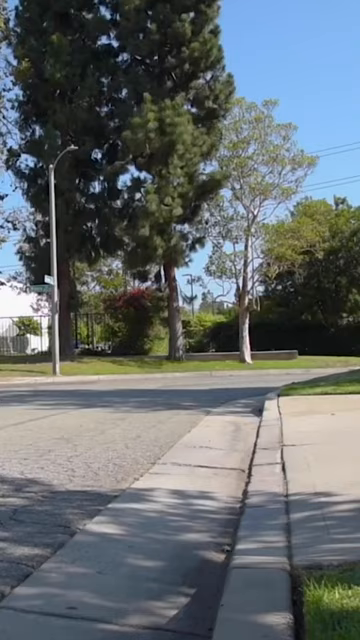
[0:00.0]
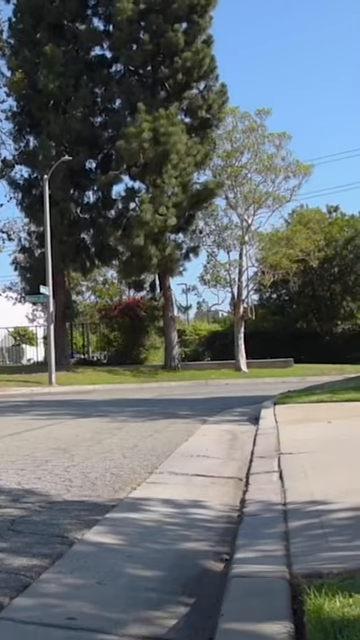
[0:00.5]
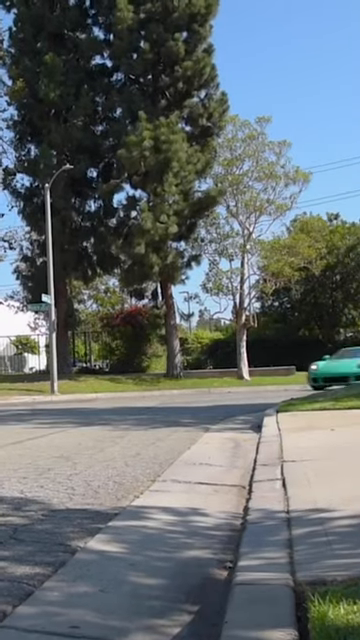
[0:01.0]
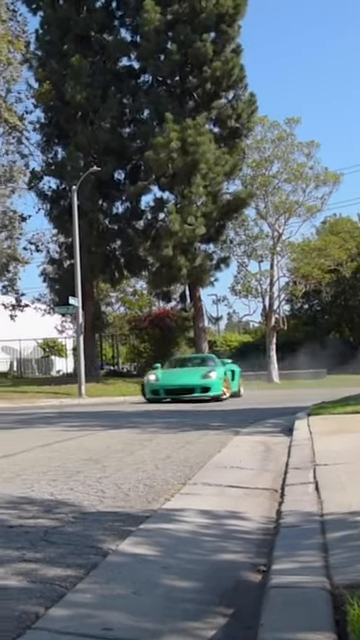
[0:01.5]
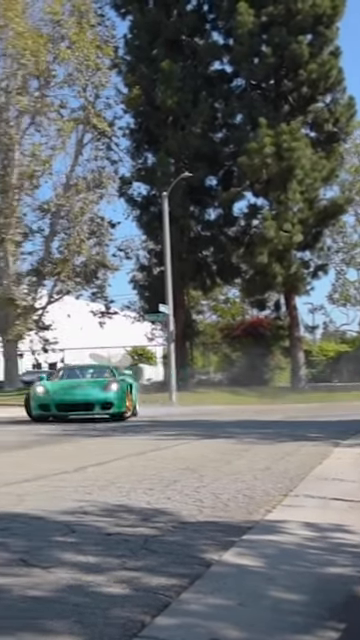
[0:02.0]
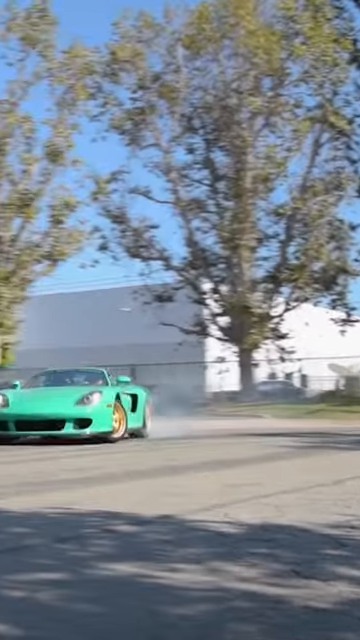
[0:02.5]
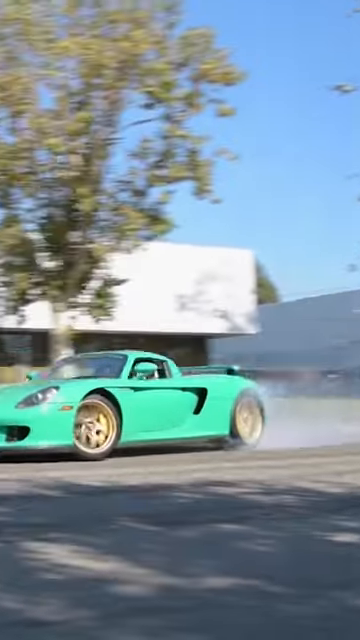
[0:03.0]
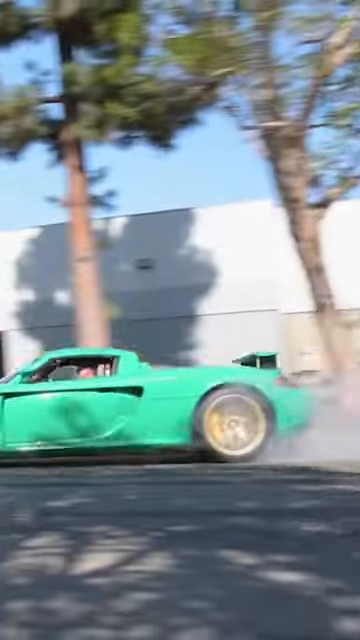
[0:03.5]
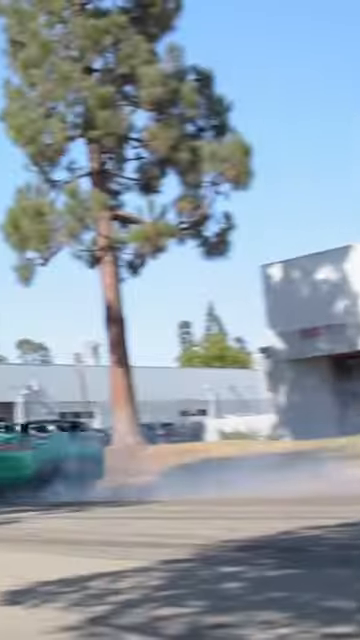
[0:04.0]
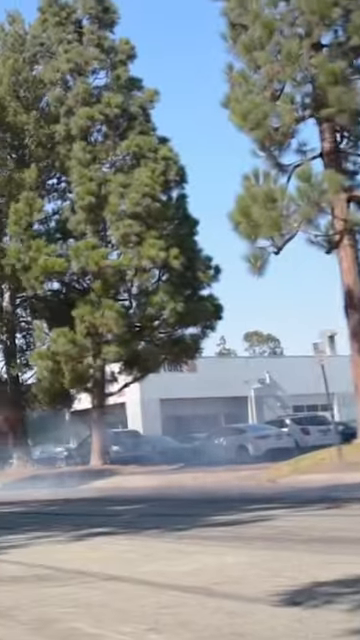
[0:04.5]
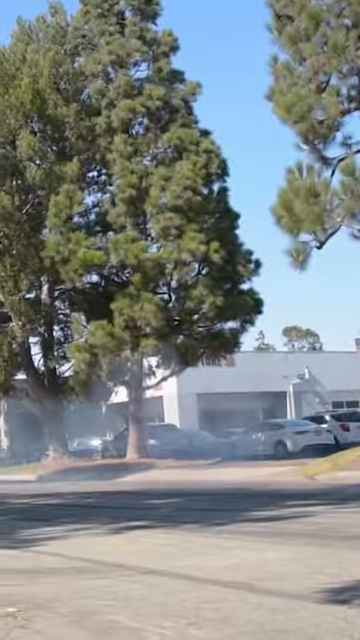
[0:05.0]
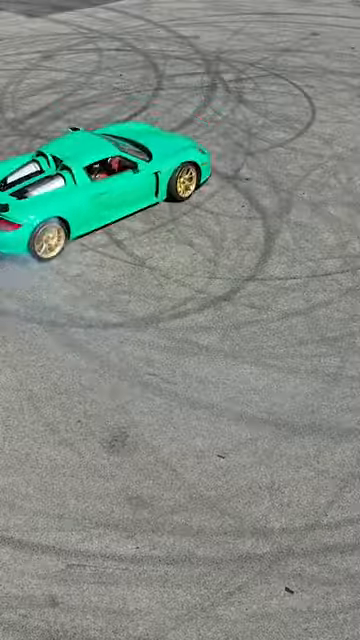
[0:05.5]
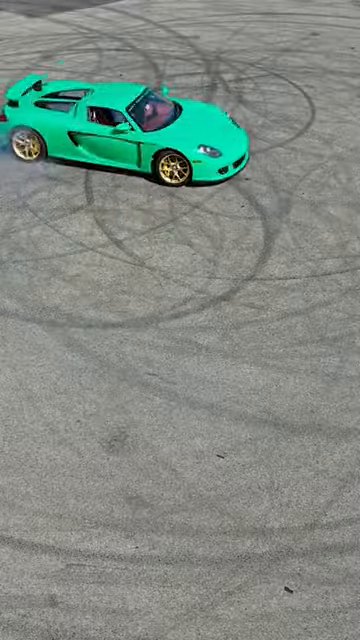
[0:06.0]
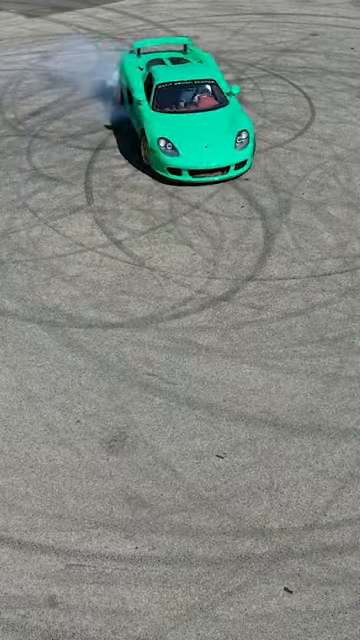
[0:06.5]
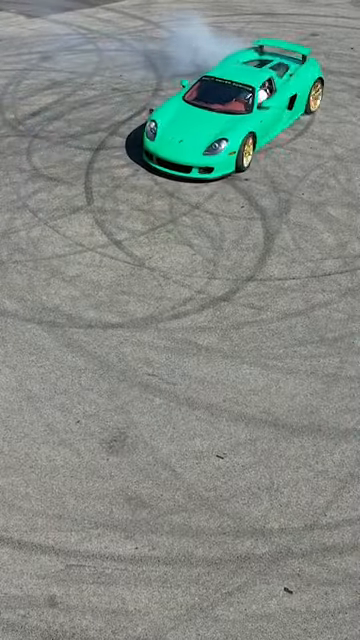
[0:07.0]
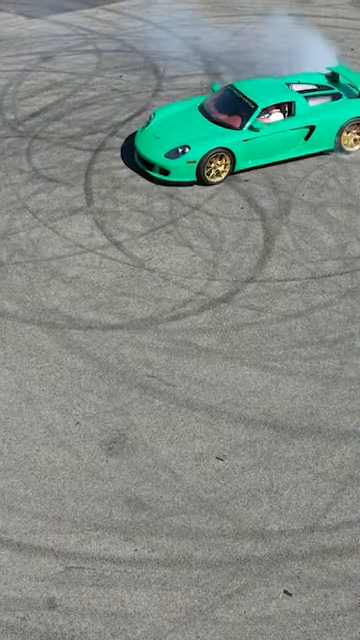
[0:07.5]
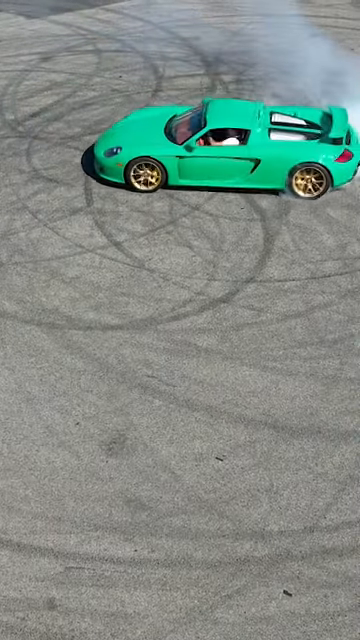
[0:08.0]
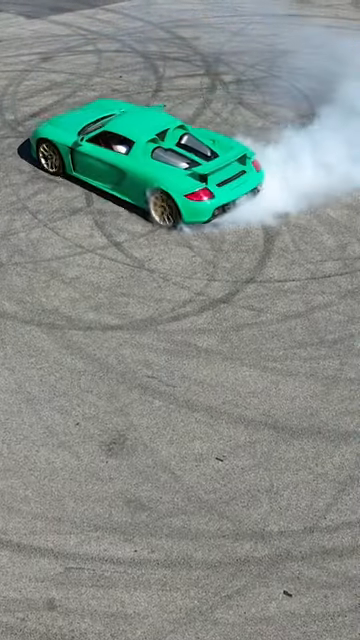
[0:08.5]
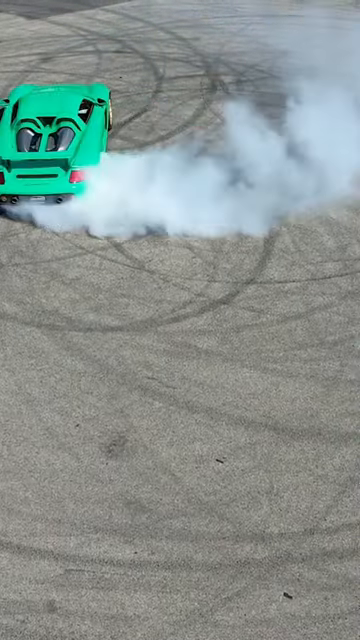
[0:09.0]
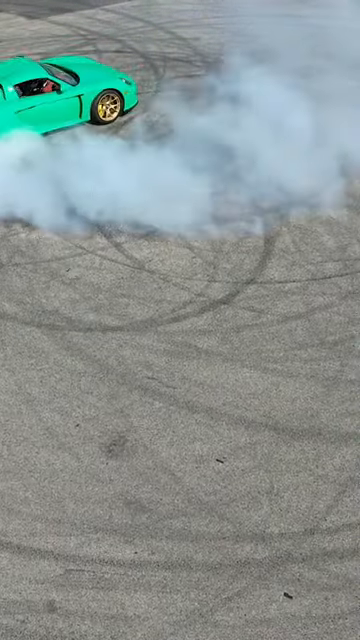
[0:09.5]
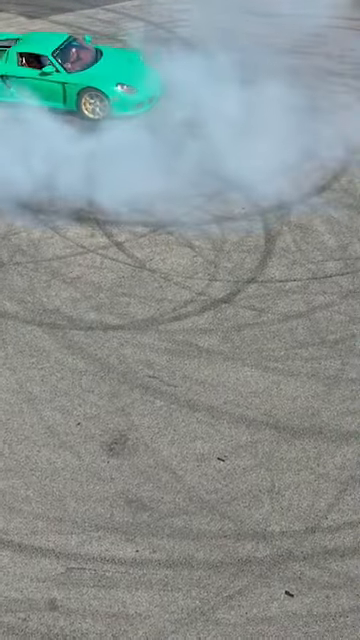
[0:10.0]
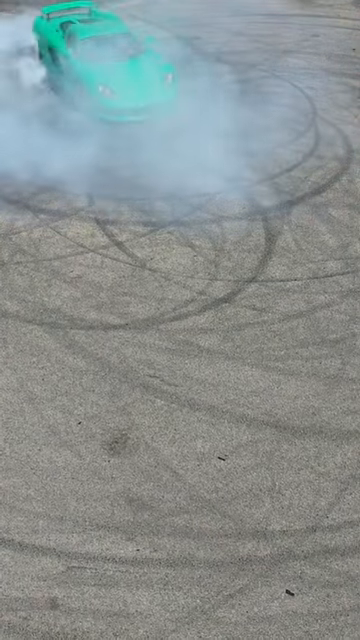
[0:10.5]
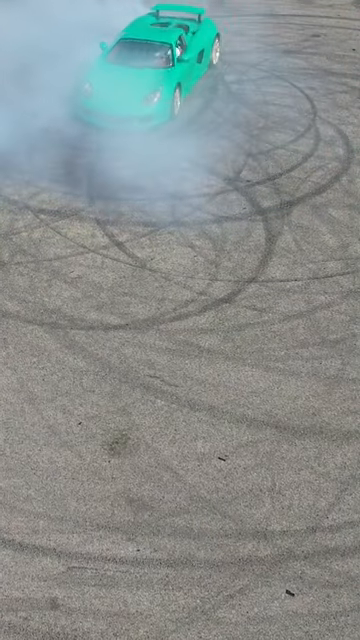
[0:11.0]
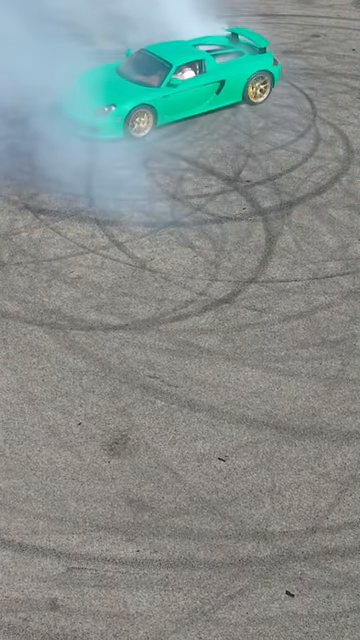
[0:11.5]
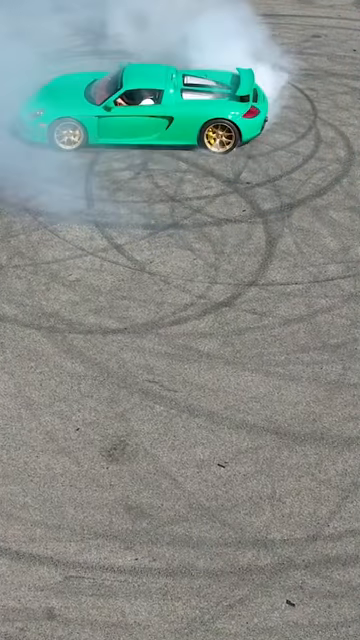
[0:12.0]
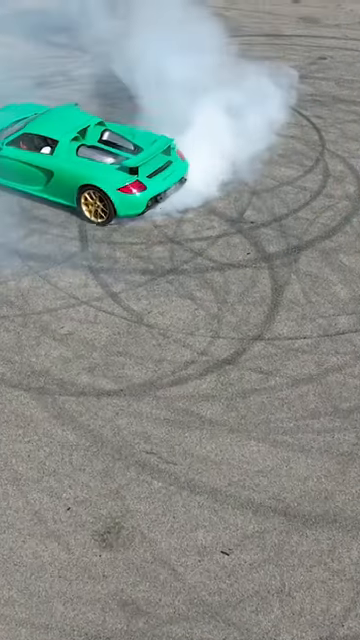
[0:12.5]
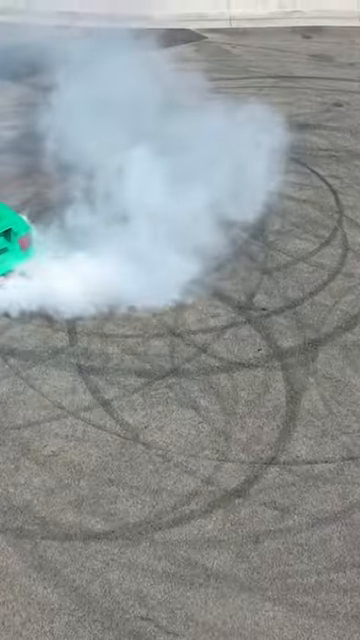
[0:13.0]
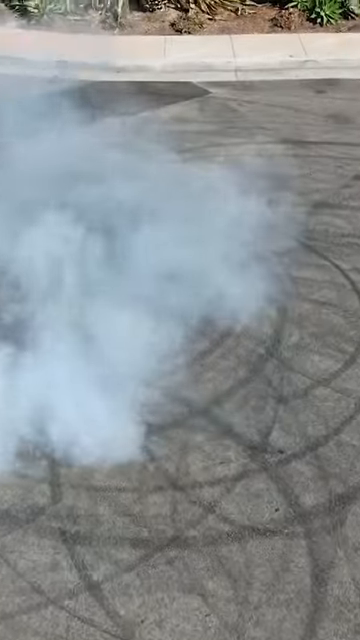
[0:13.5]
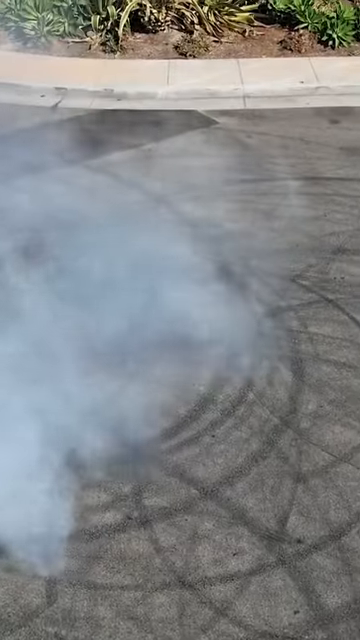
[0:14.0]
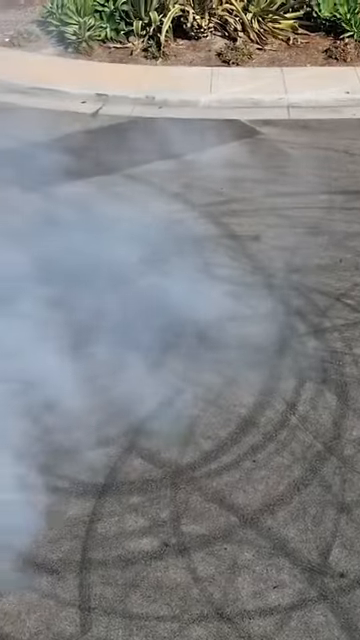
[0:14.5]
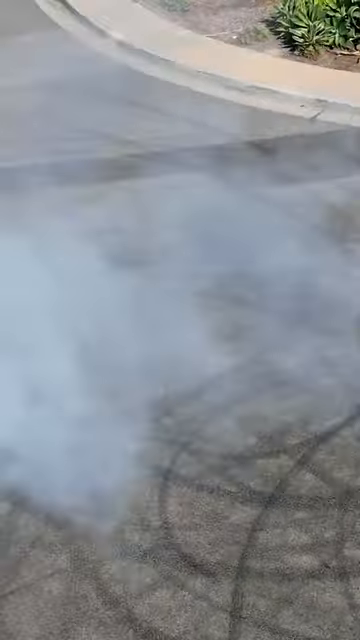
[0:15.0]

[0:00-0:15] In a vertical TikTok video, a Porsche 911 Carrera GT in a minty, turquoise-like color with gold rims does donuts in a parking lot and then speeds off. A YouTube video title says the car is 1.5 million dollars.